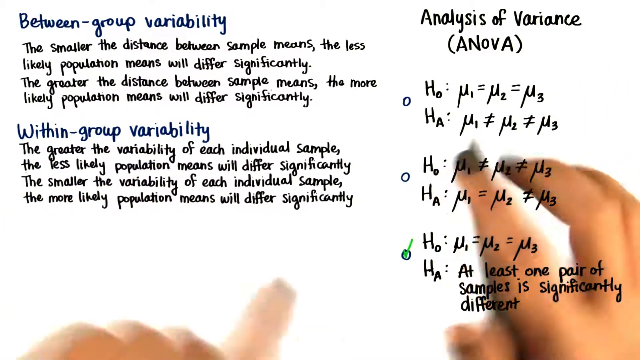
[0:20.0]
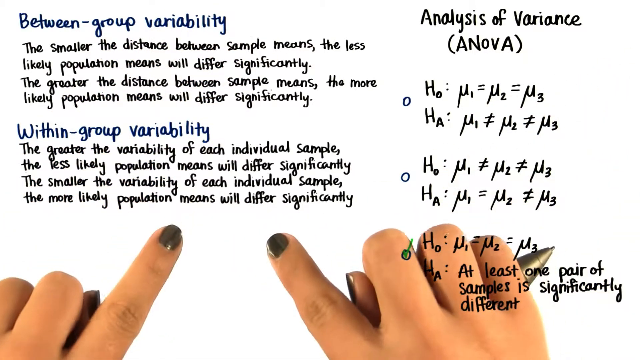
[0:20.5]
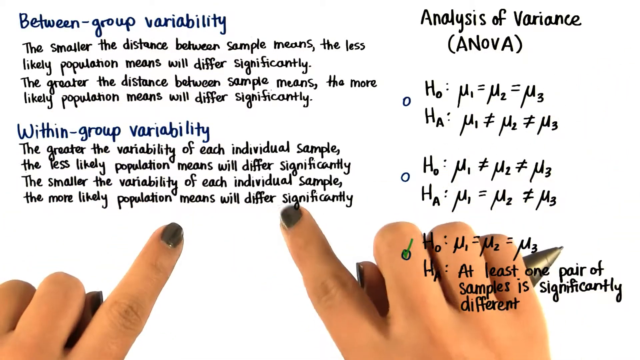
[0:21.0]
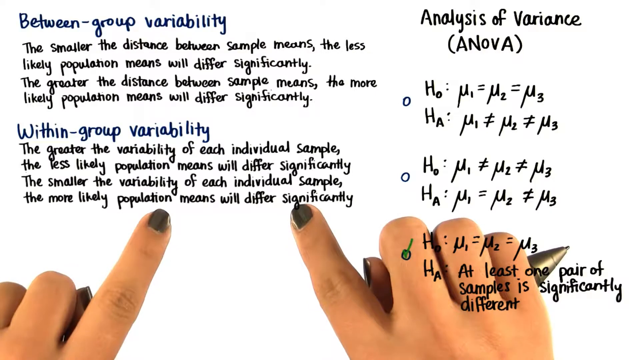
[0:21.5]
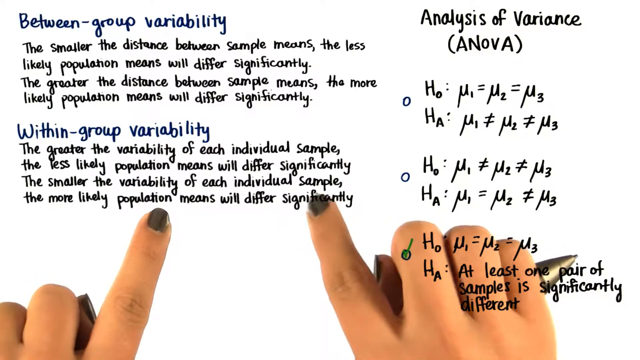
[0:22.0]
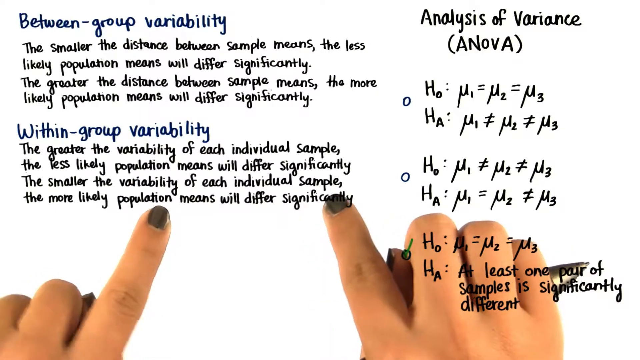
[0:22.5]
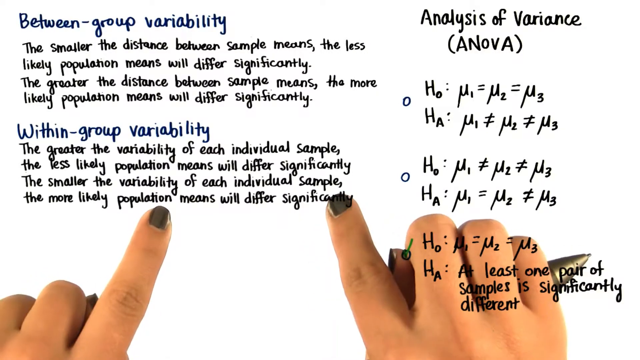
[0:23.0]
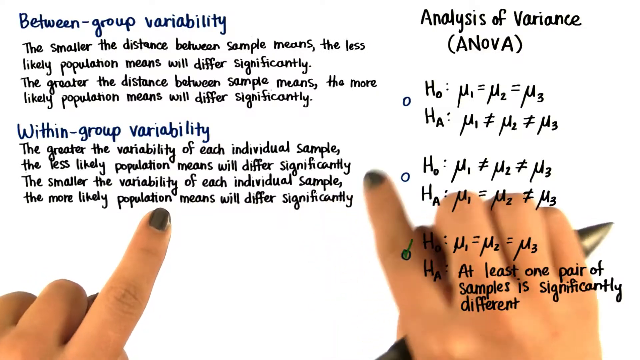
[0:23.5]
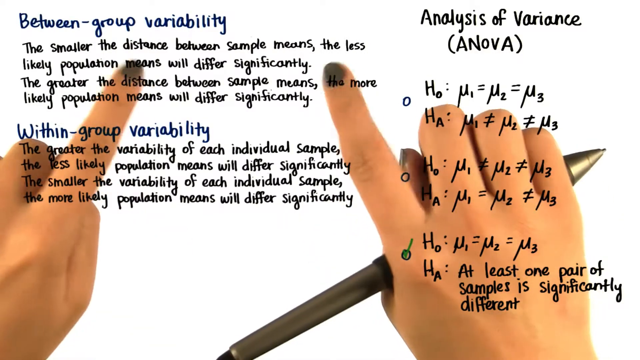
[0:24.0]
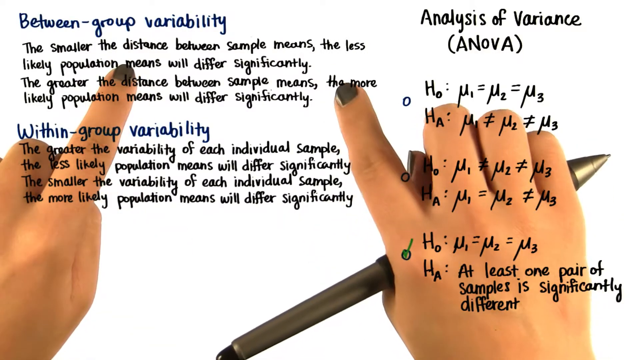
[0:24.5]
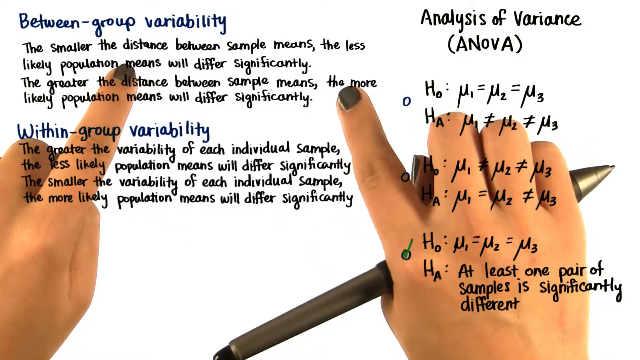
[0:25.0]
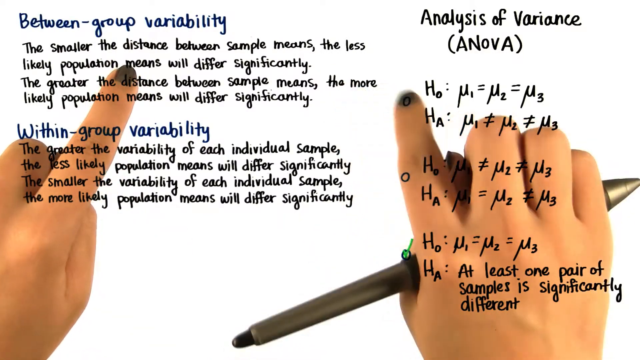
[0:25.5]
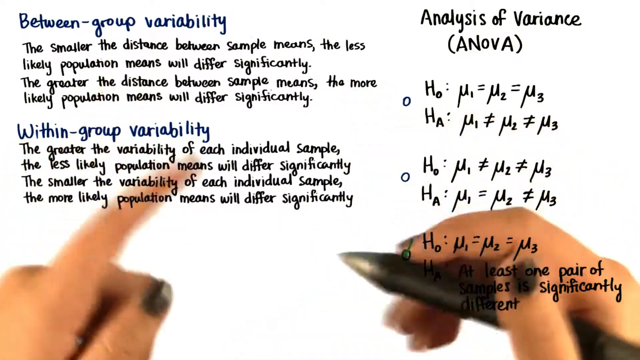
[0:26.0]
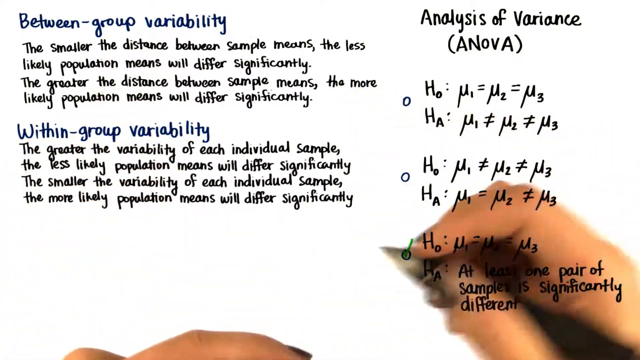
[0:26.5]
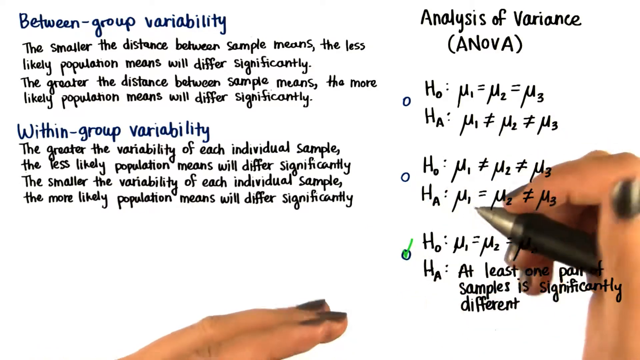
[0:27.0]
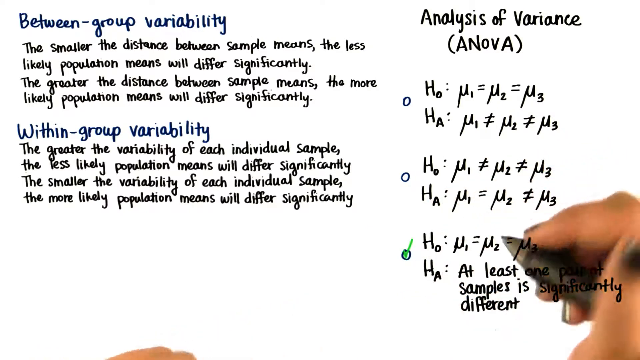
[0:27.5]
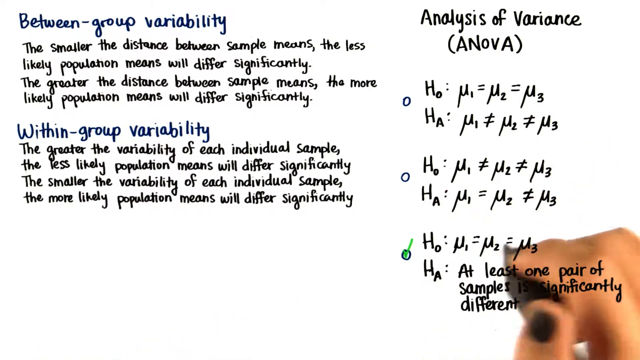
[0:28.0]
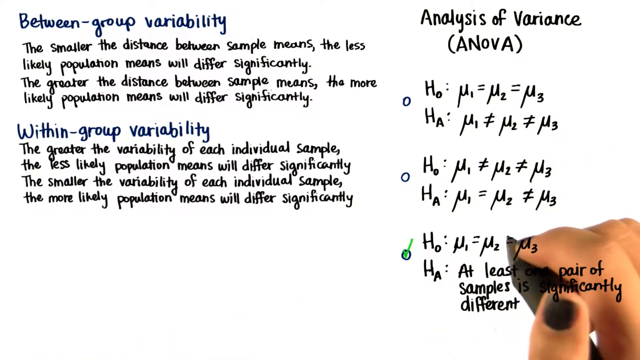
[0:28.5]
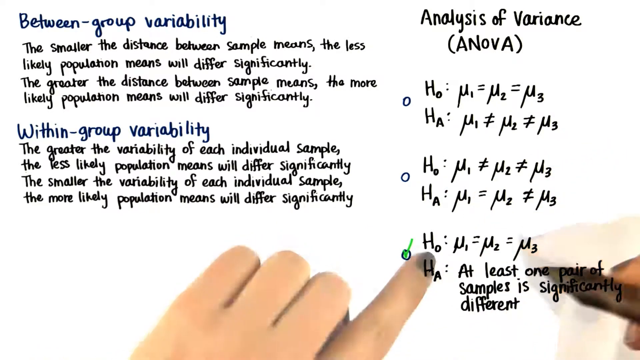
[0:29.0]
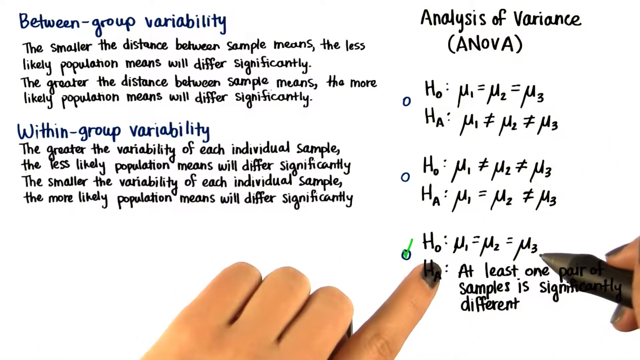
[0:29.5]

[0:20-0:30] The person moves their hands to the lower left side of the screen, where there is some empty white space, and points both pointer fingers just below the definition of within group variability, at two words at the bottom, "population" and "significantly". While pointing, they hold a mechanical pencil or marker in their right hand, visible popping out of the right side of the hand. They then move their hands up to the between group variability definition above. Their fingernails are a dark gray color. The scene fades to another shot in which the right hand has moved over slightly; they pick up the marker again into position in their right hand and look at the bottom point on the right side, underneath Analysis of Variance. It then fades to them pointing at it again with their left hand, close to the area where they made the checkmark.